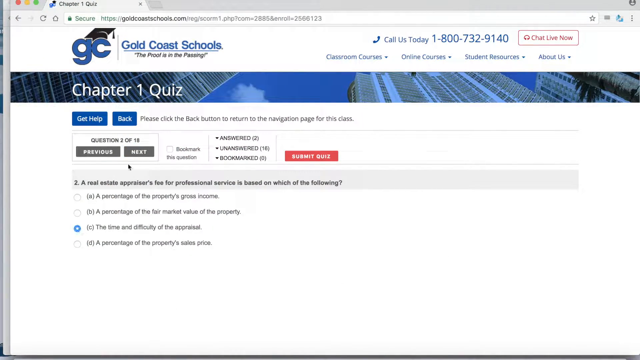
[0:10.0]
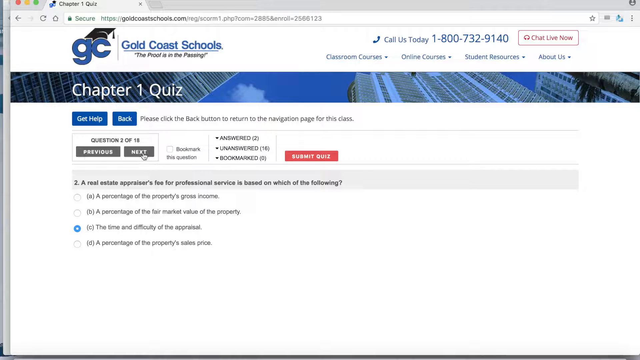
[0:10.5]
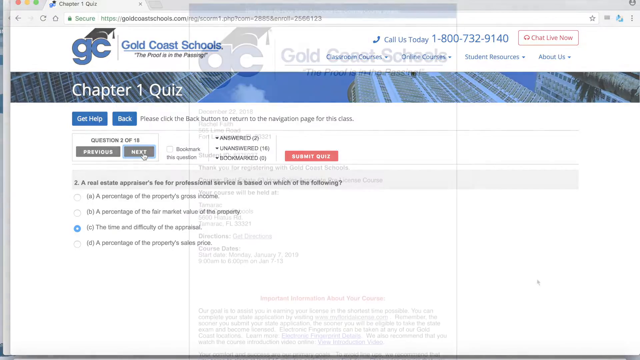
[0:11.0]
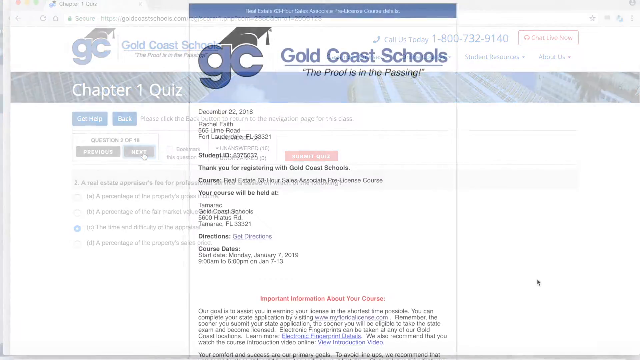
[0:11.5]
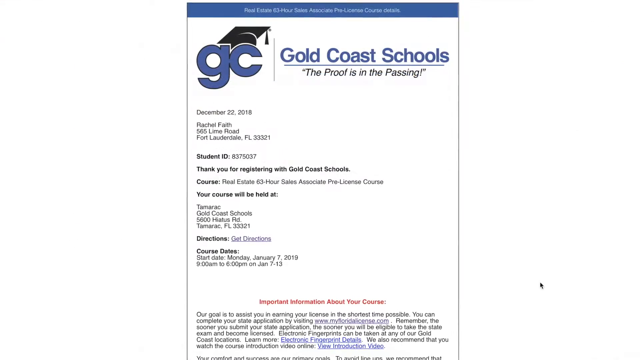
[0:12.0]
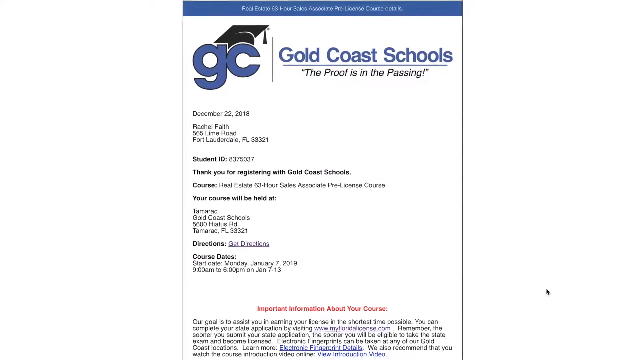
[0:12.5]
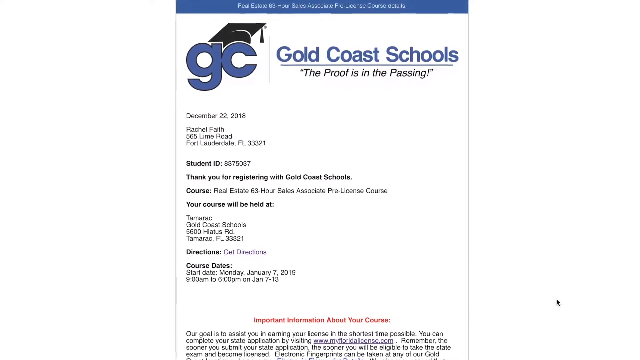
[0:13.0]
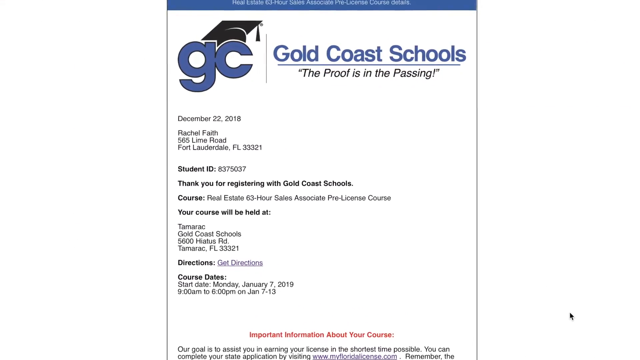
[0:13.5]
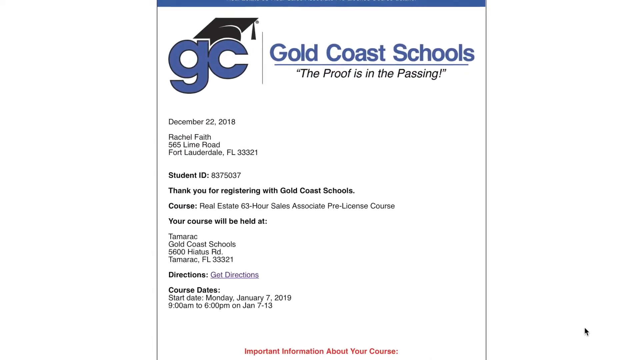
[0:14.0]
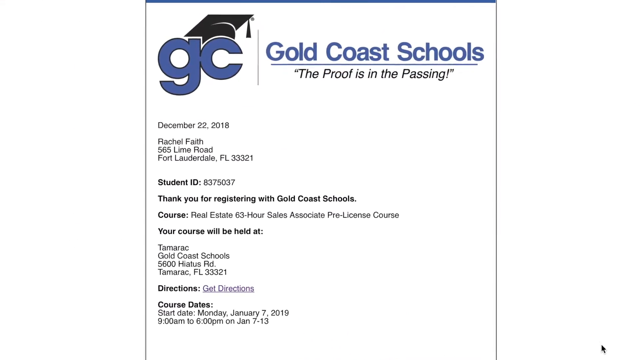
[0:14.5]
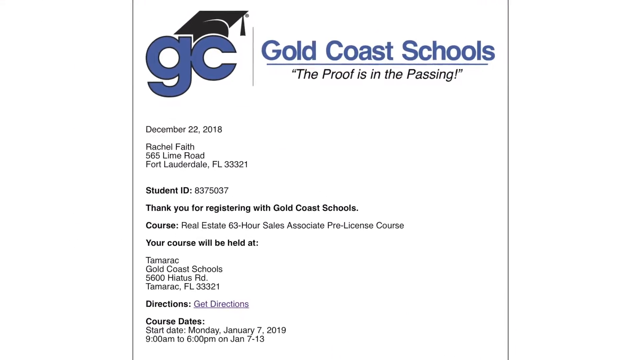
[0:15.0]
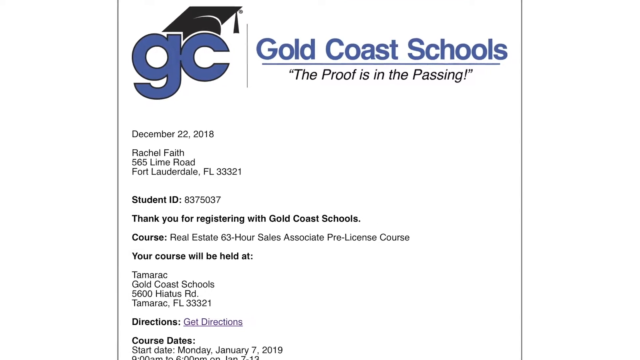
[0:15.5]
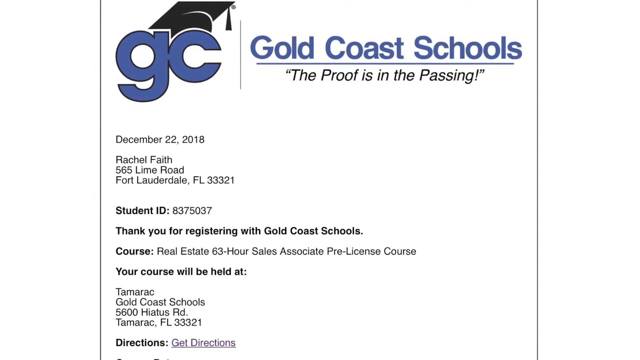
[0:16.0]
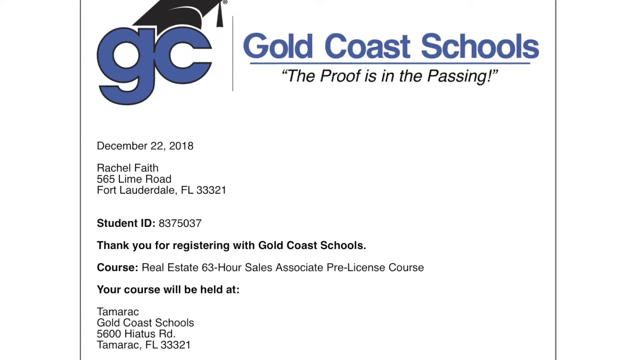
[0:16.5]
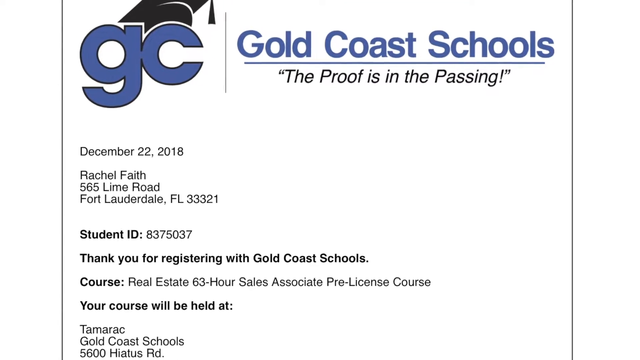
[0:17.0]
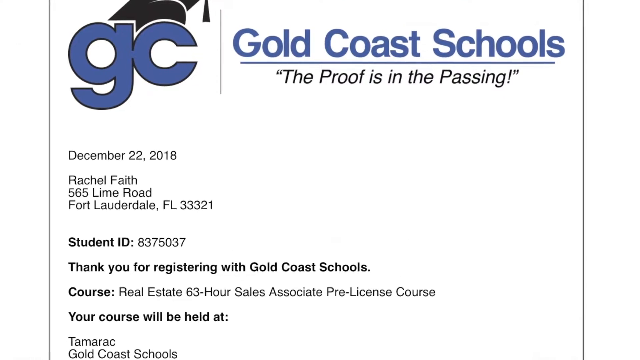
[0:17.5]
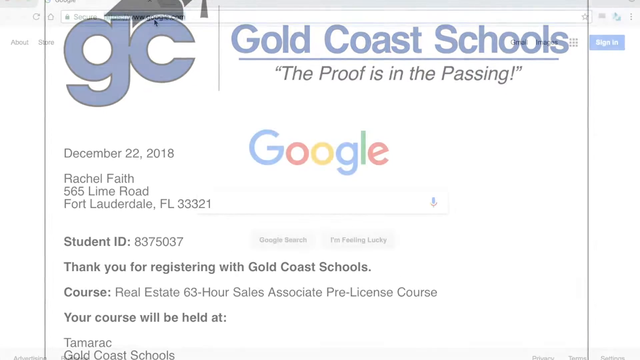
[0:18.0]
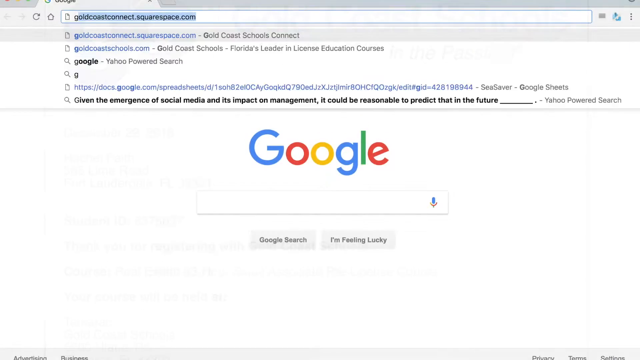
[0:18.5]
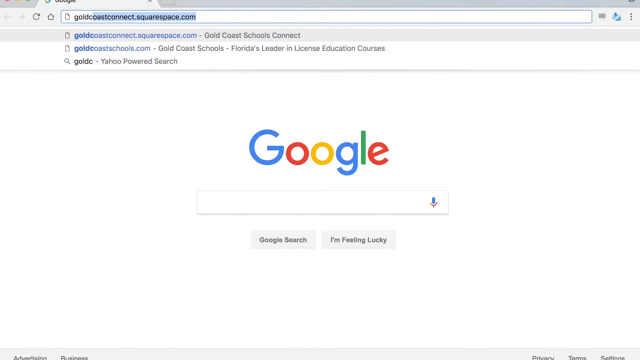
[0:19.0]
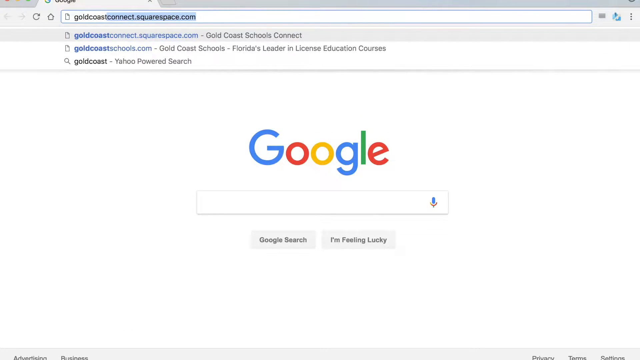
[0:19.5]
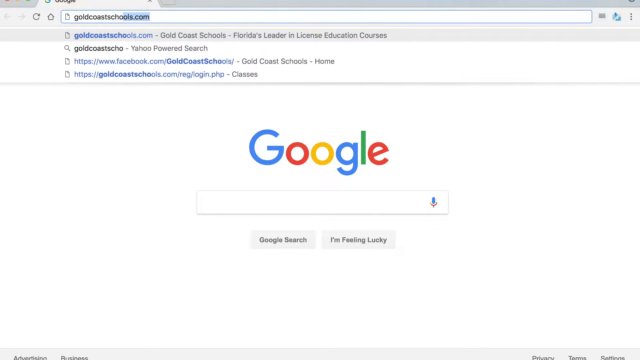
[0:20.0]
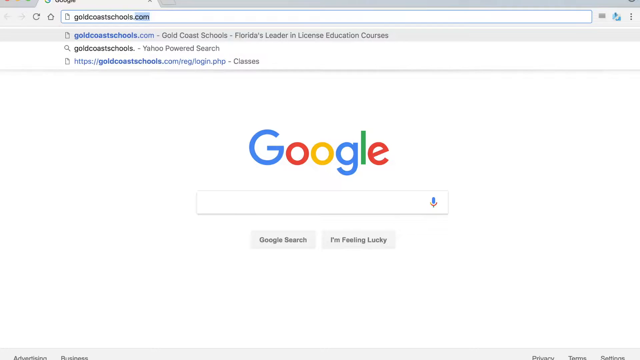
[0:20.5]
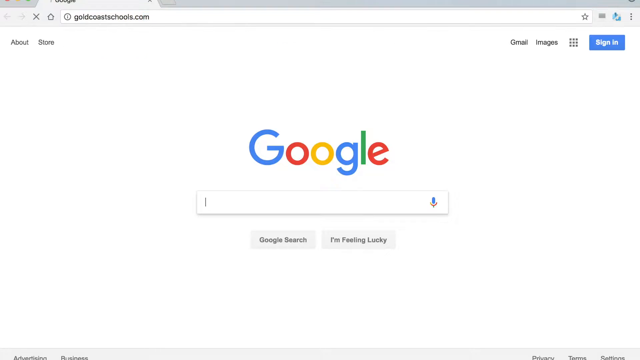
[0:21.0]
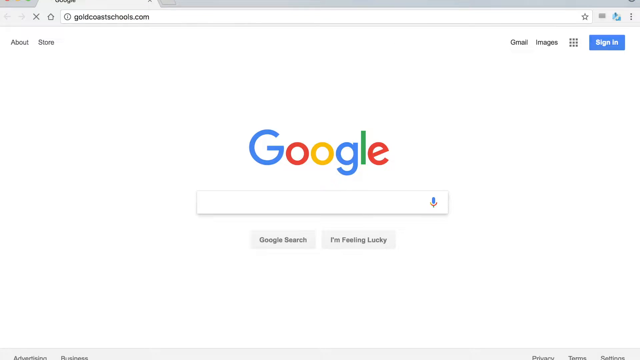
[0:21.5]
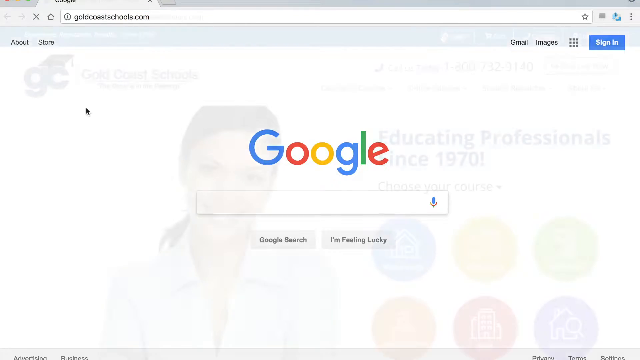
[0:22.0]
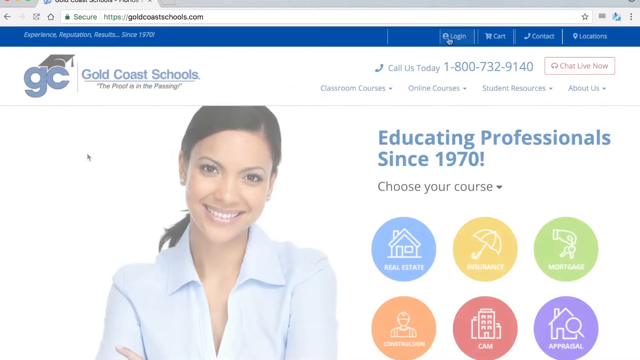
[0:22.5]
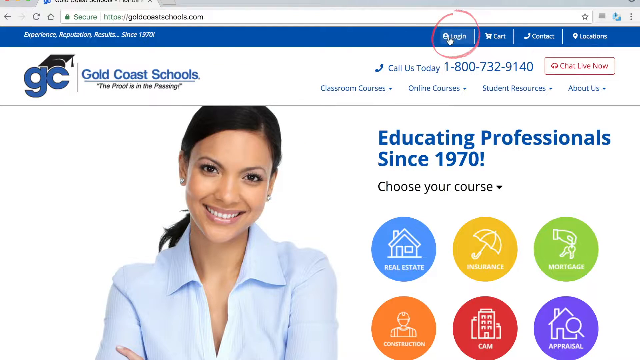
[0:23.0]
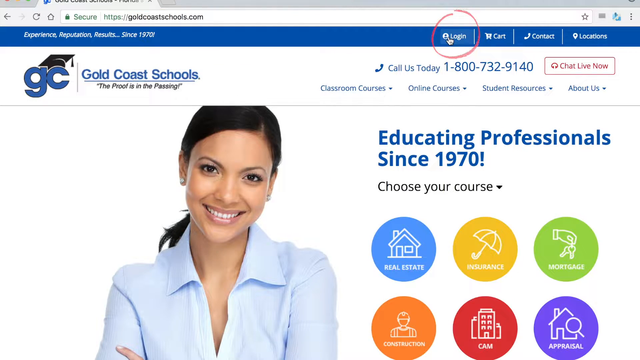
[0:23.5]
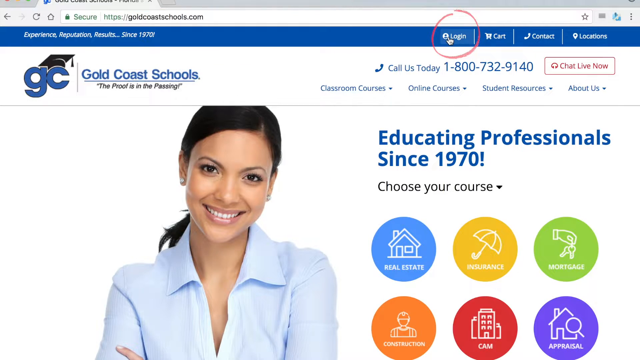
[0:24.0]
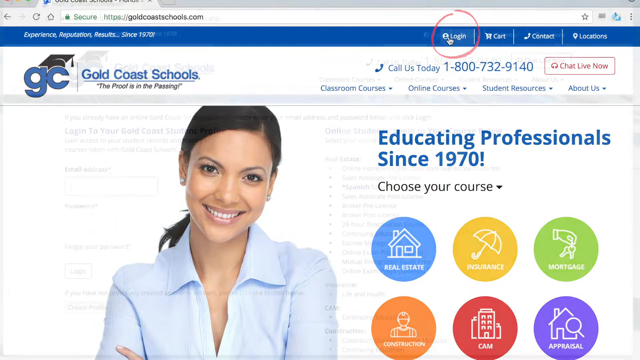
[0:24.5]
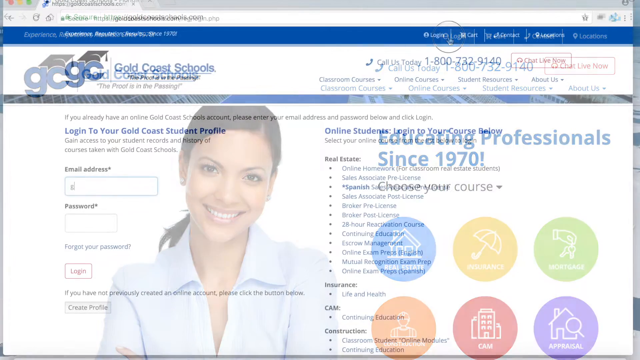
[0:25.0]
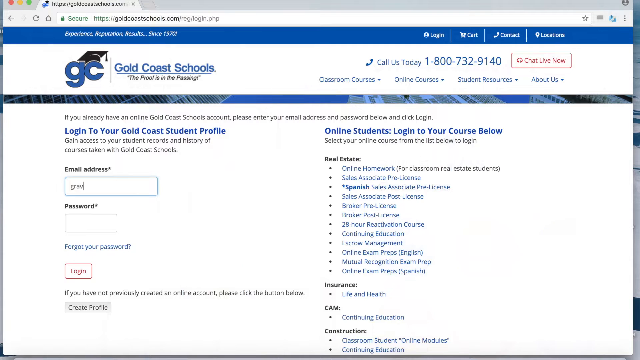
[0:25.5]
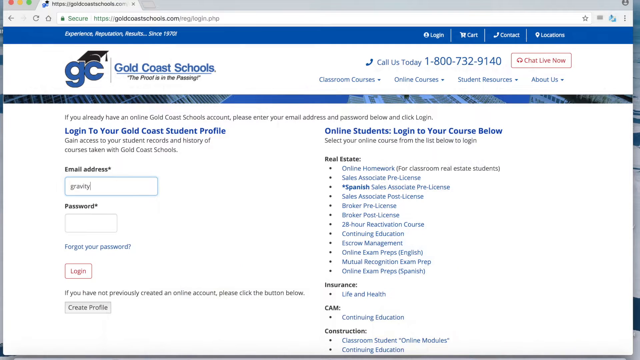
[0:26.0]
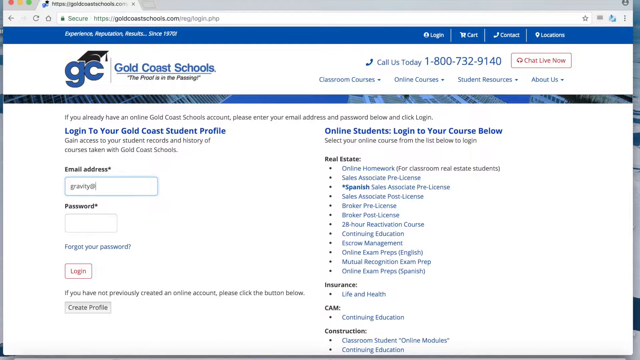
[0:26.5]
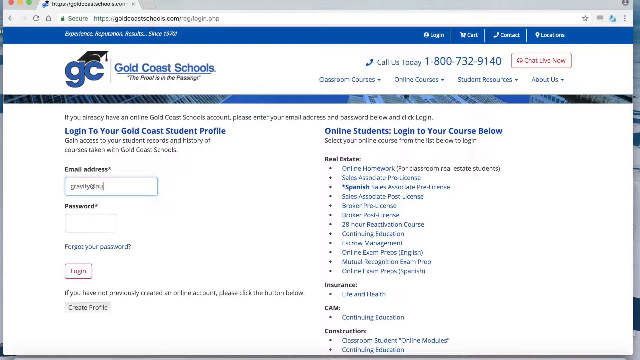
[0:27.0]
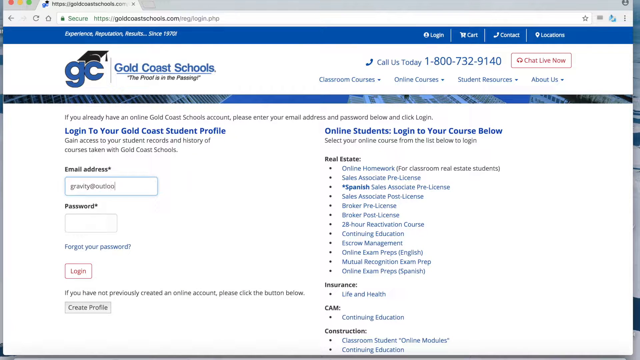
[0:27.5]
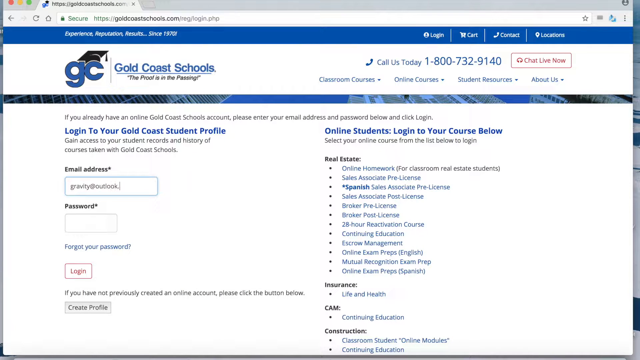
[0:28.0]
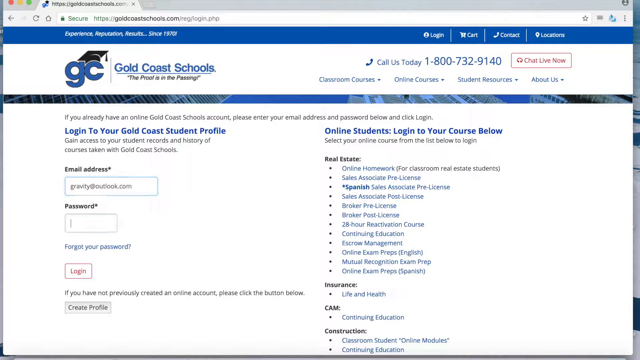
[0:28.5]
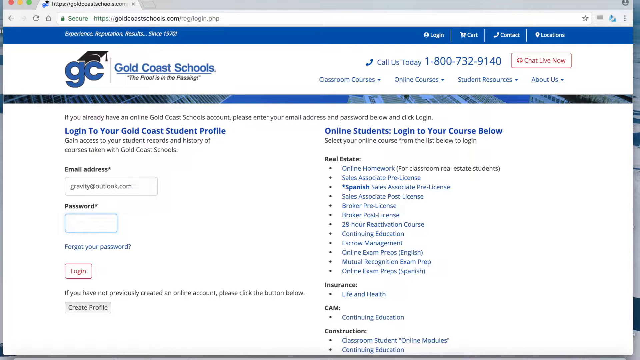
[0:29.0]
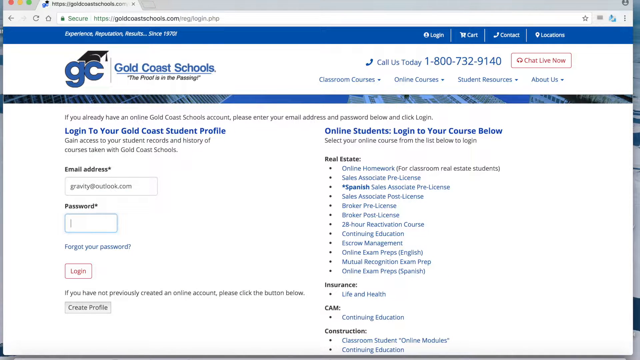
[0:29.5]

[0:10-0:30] A Gold Coast Schools page reads "The proof is in the passing." It shows a letter to a person with a student ID, which reads "thank you for registering with Gold Coast Schools." It goes on to give the course, "real estate Sales Associate Pre-License Course", and then where the course will be held. The camera zooms in on this page so the details can be seen more clearly. The view then pans to a Google search page, where someone types goldcoastschools.com in the search bar at the top. This leads to the main page of the Gold Coast Schools website, where the Login button is circled in red. The page shows a smiling young woman with a ponytail and a light blue shirt, and to the right of her it reads "Educating professionals since 1970, choose your course", offering various courses to choose from. Next comes the "Login to your Gold Coast student profile" page, where someone enters an email address and then types in a password, followed by the Chapter 1 quiz portion.